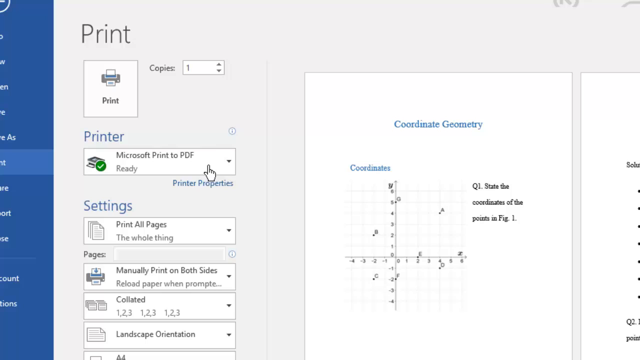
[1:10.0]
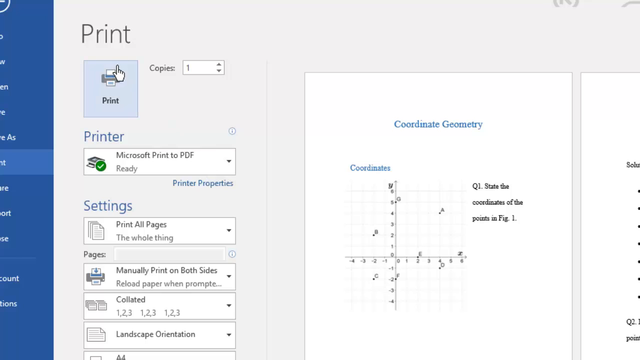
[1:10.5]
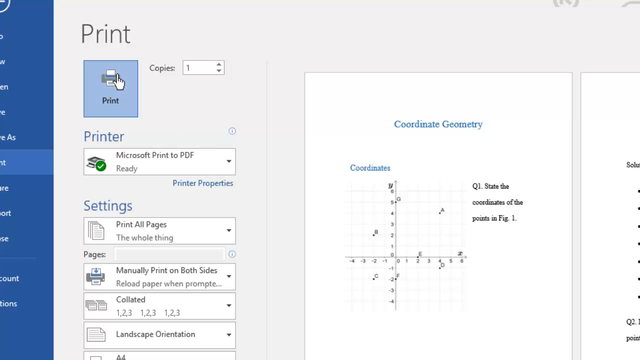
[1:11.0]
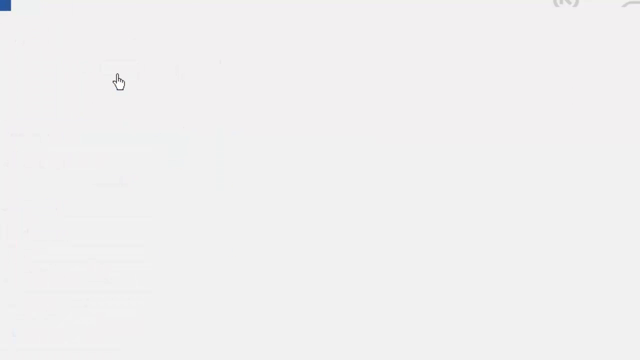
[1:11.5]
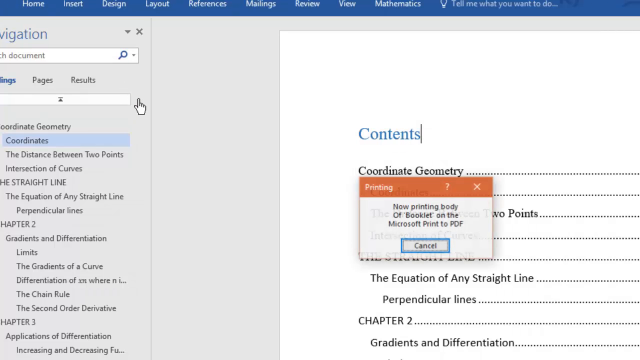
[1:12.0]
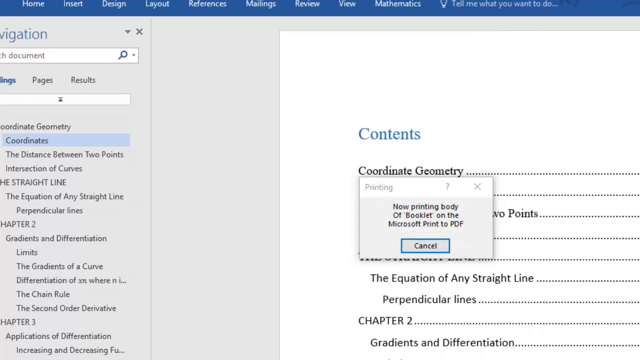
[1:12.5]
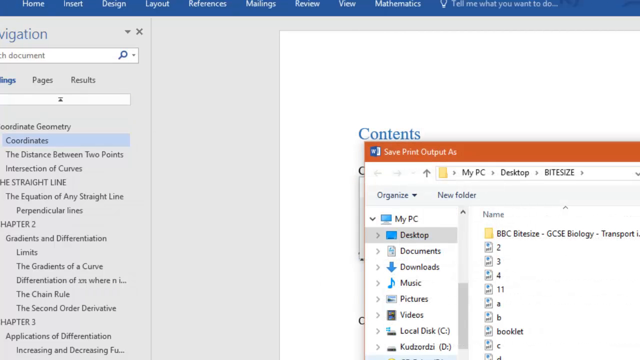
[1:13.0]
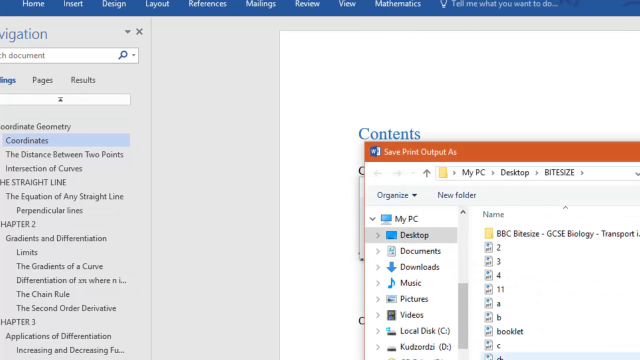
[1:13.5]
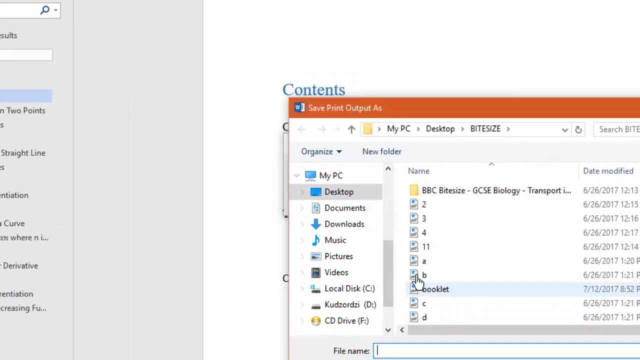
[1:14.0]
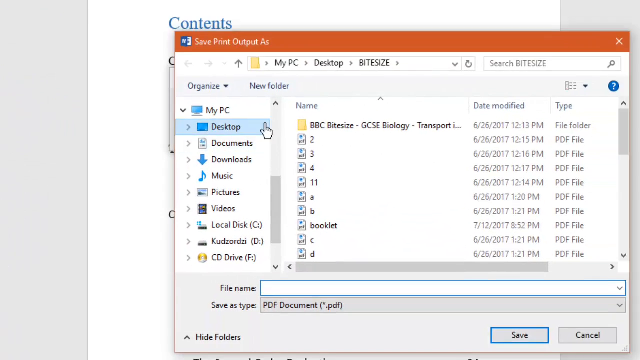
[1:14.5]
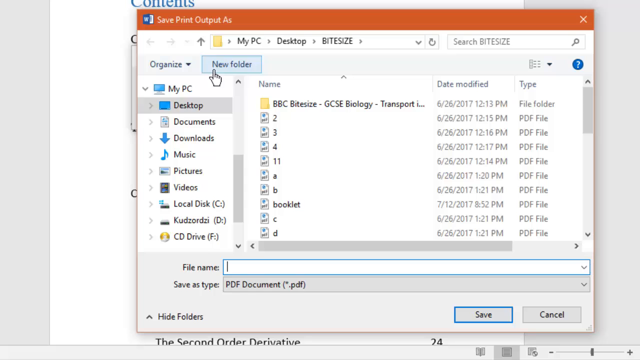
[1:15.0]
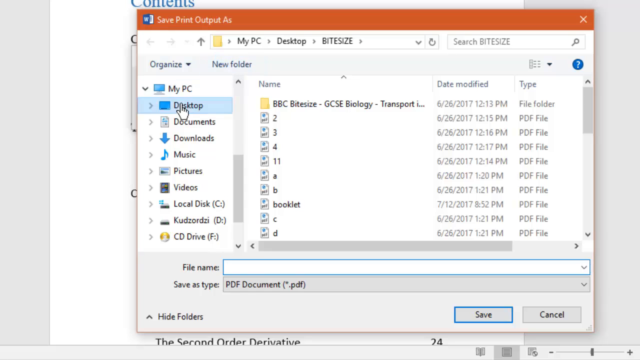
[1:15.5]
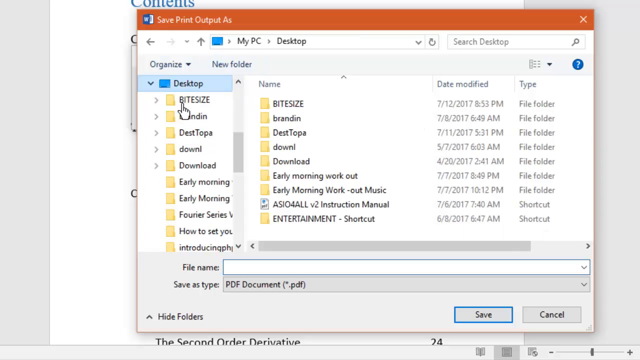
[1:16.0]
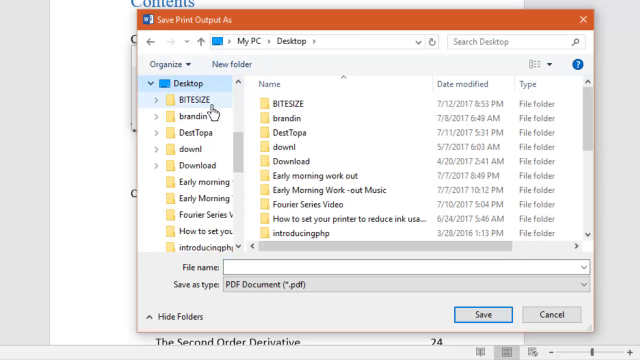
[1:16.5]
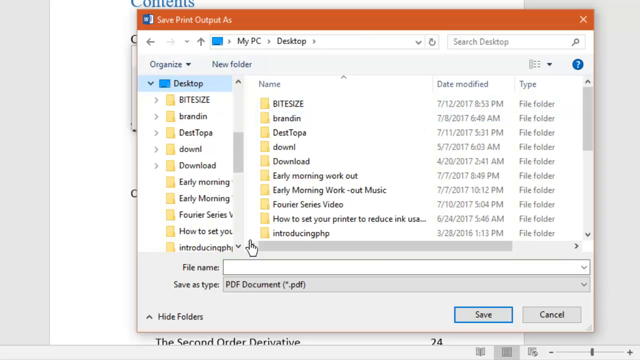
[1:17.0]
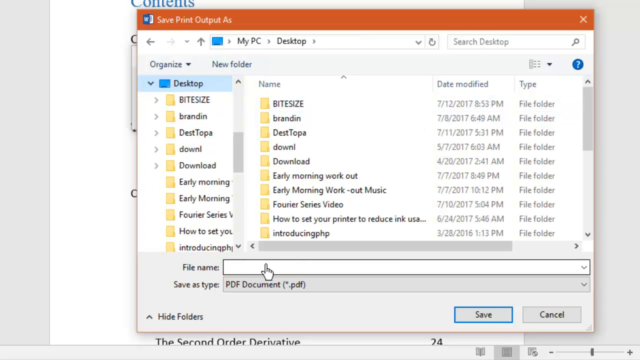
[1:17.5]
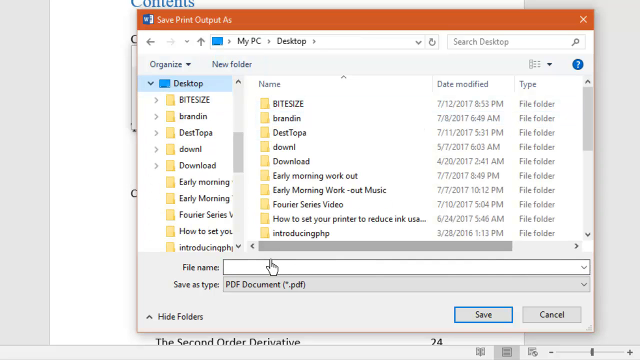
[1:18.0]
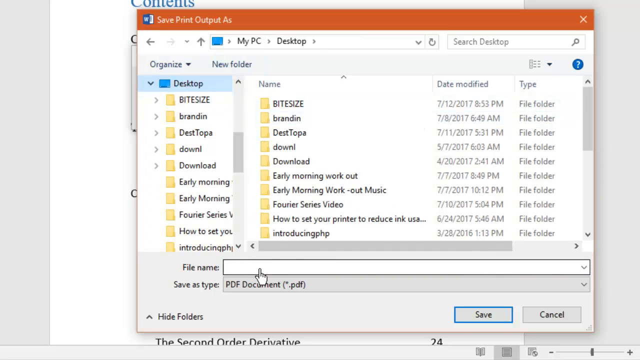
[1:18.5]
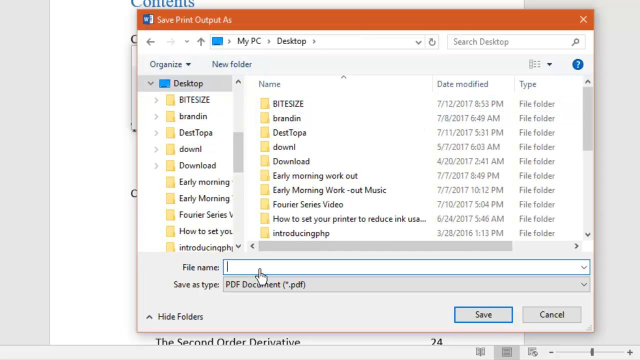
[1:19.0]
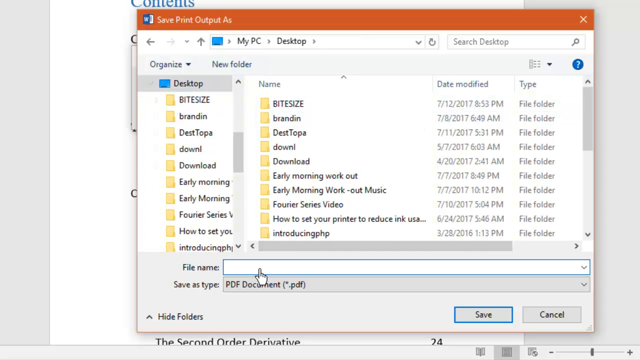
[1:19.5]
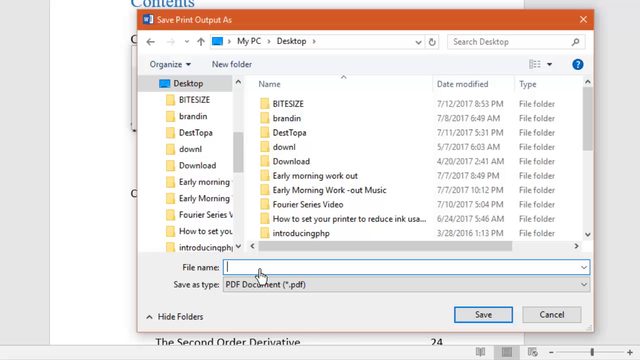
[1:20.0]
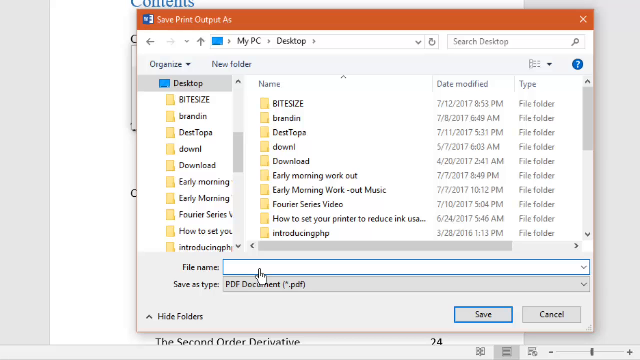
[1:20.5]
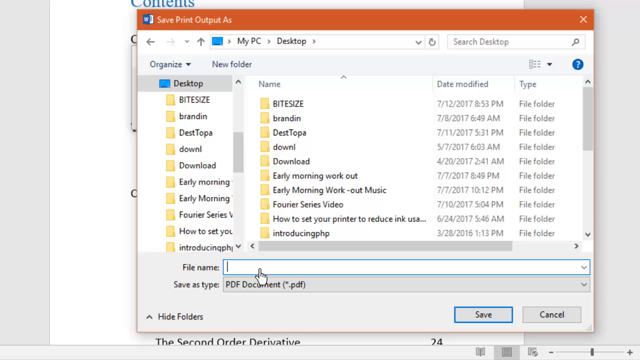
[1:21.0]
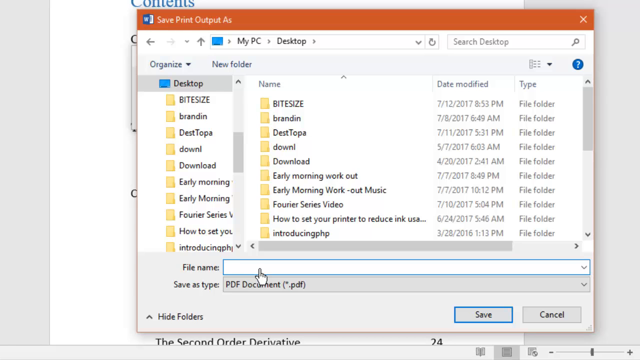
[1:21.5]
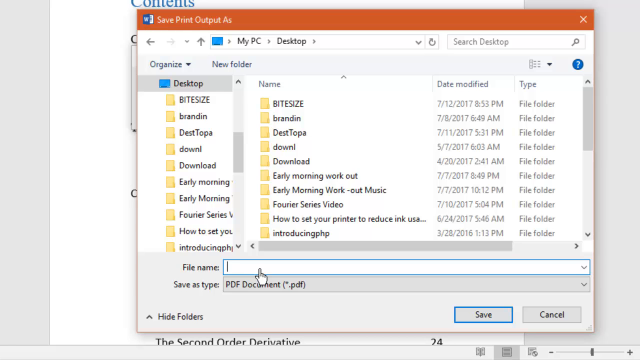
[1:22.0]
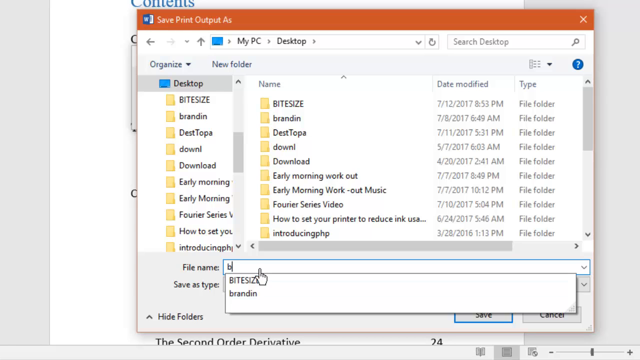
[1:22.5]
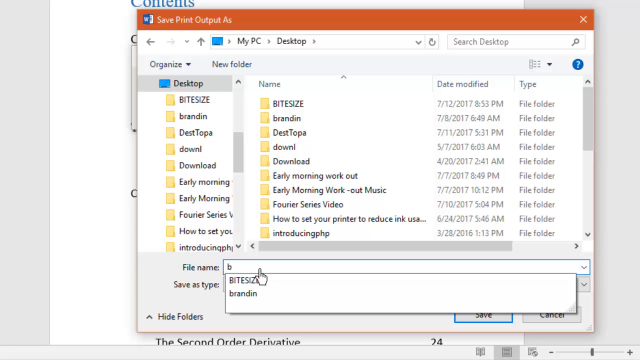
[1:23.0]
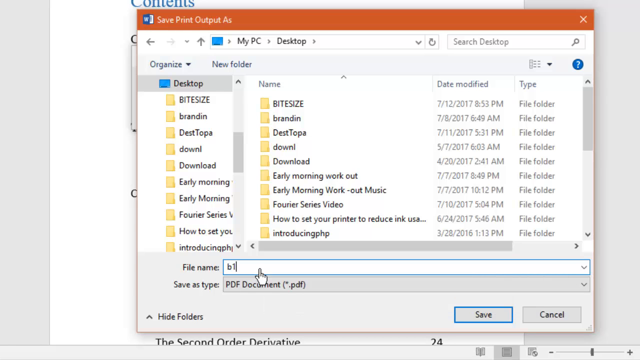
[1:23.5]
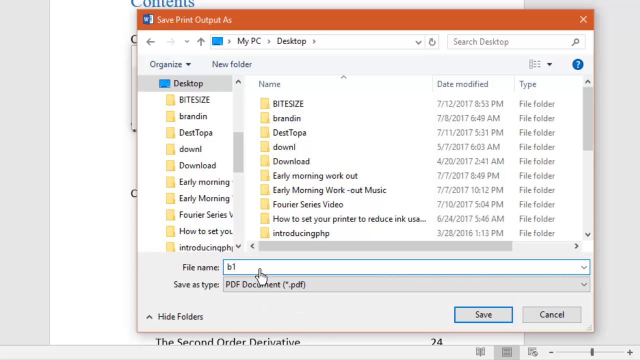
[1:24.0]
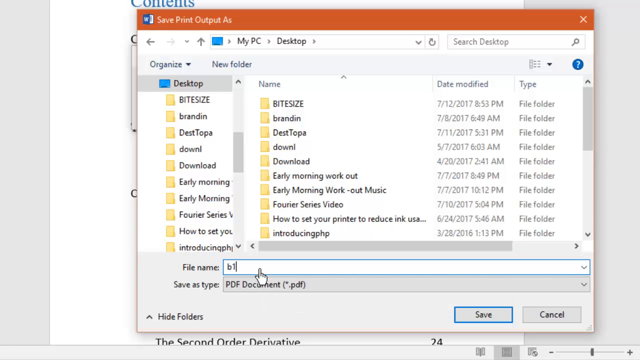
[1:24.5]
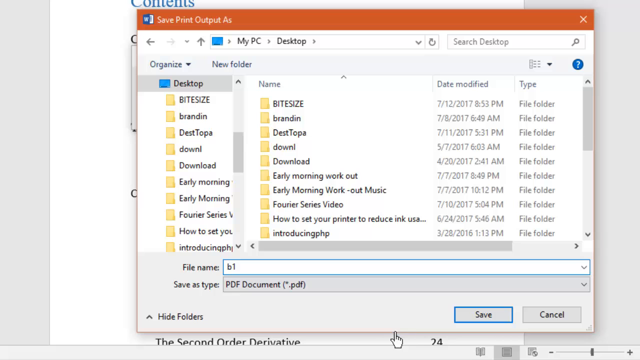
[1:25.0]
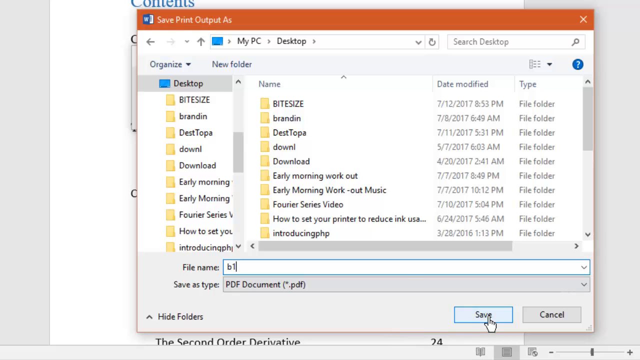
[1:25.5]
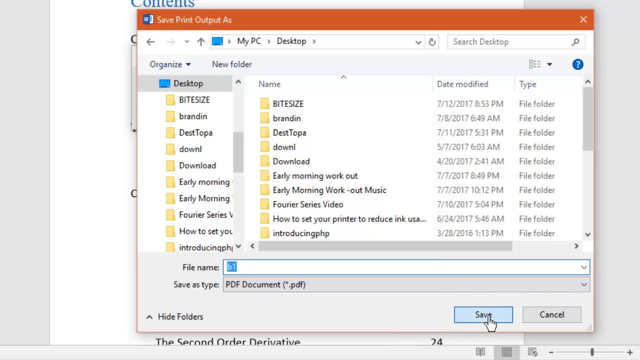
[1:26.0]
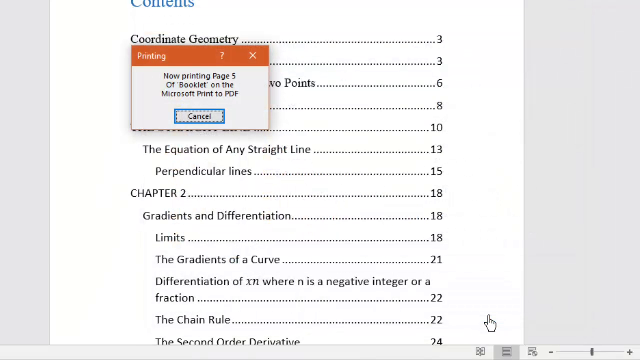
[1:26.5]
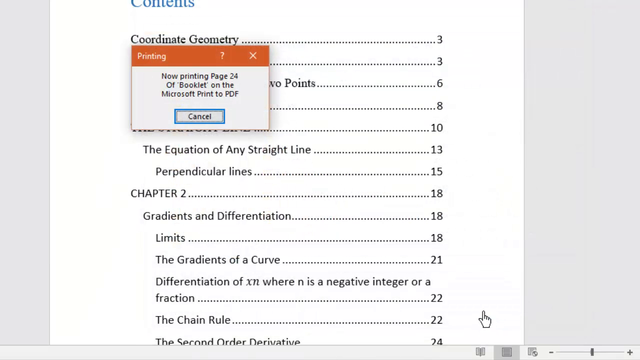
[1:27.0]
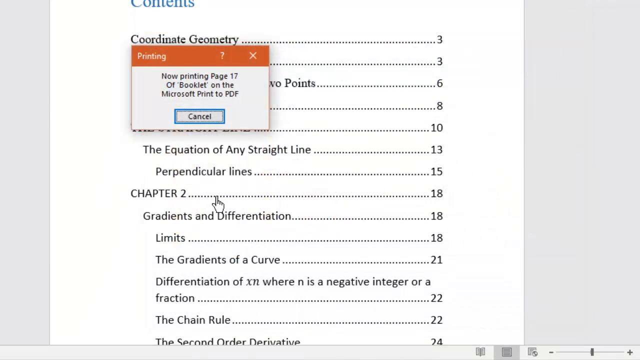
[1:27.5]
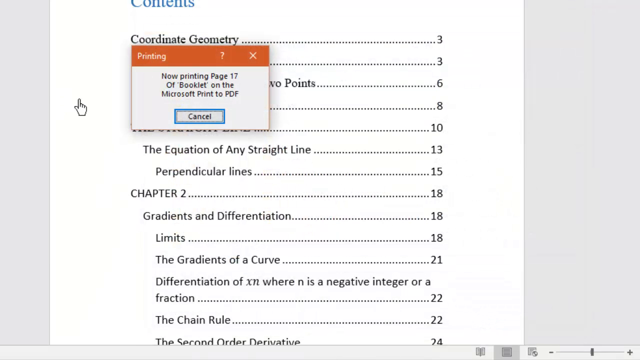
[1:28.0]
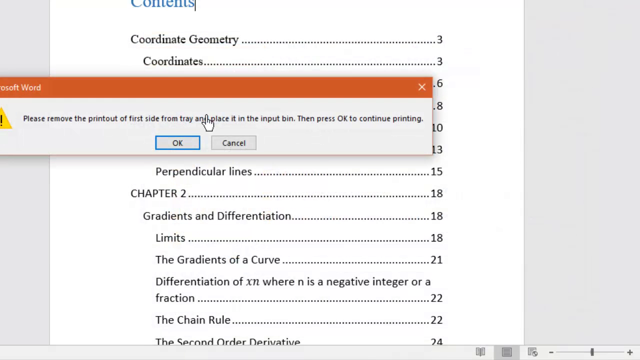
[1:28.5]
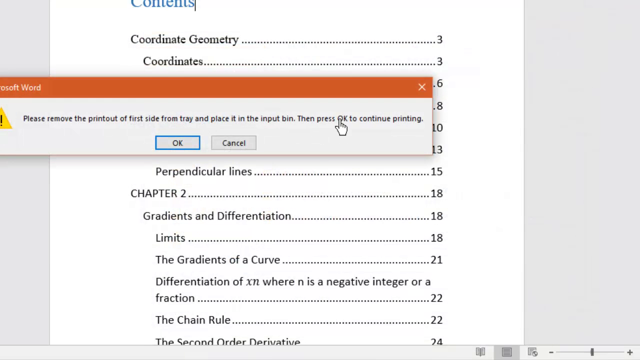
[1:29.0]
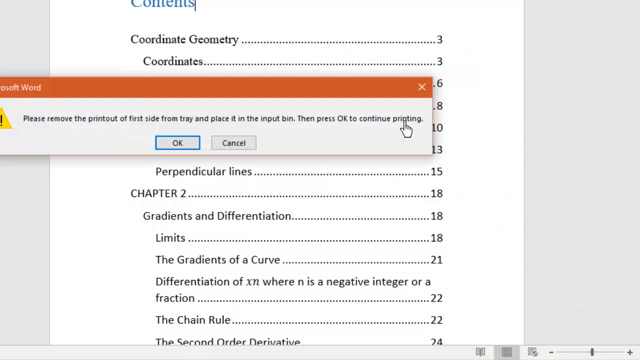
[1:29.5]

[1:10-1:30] Someone films themselves using Microsoft Word with a cursor shaped like a right human hand with a pointing finger. The cursor is on the printer drop-down menu, having been on Microsoft Print. It moves up to the print button and clicks the word "print." A "save print output as" box pops up. The cursor clicks on new folder, then on desktop, and goes down to the file name field, where a cursor is blinking; "B1" is typed and save is clicked. A small box pops up that says "printing," apparently printing about 17 pages. Then a Microsoft Word text box pops up about removing the printout of the first side from the tray, giving instructions for a physical print, and it is clicked off.